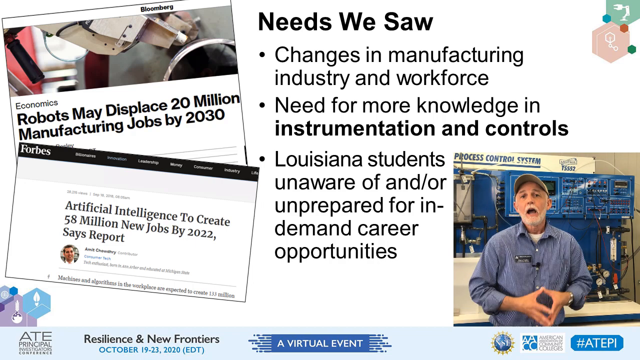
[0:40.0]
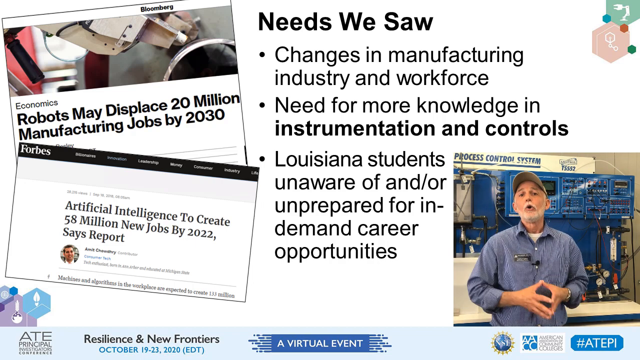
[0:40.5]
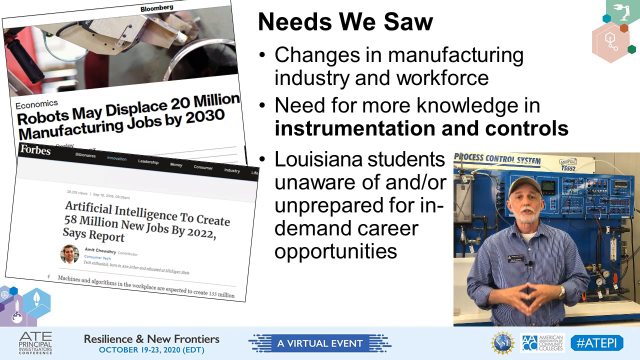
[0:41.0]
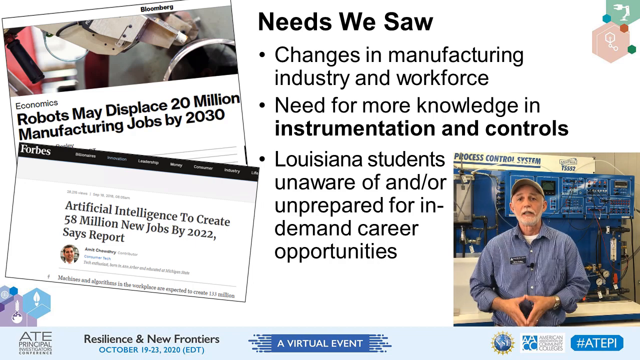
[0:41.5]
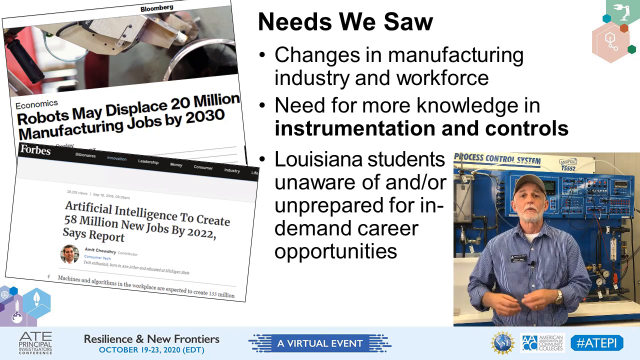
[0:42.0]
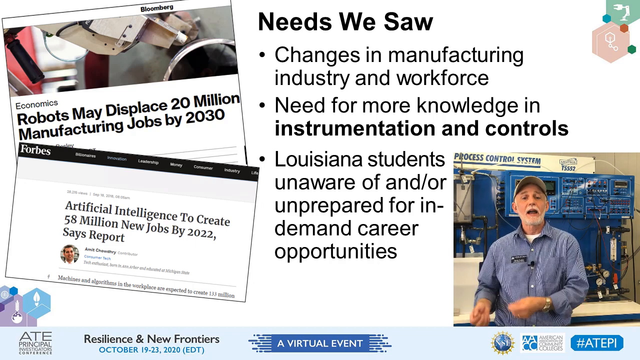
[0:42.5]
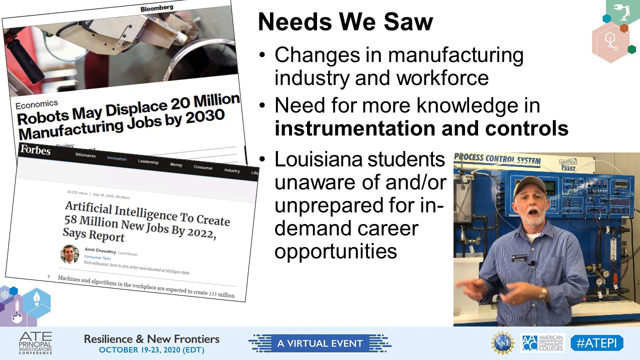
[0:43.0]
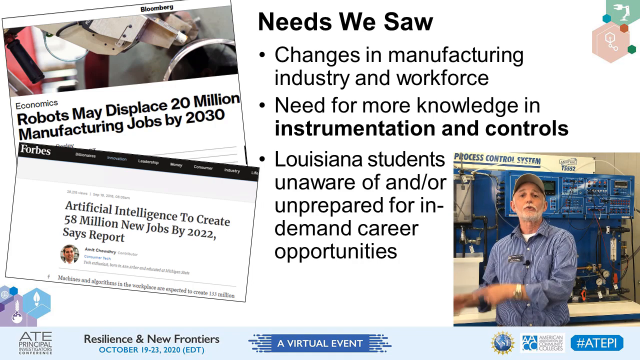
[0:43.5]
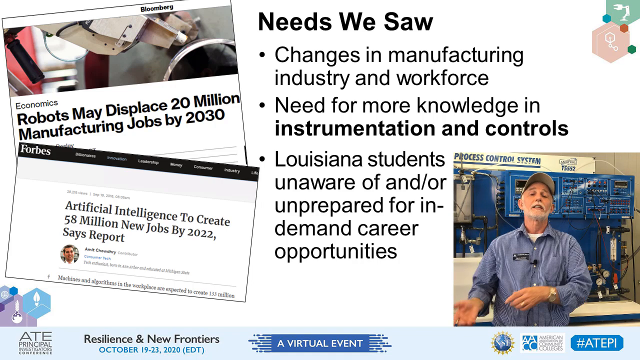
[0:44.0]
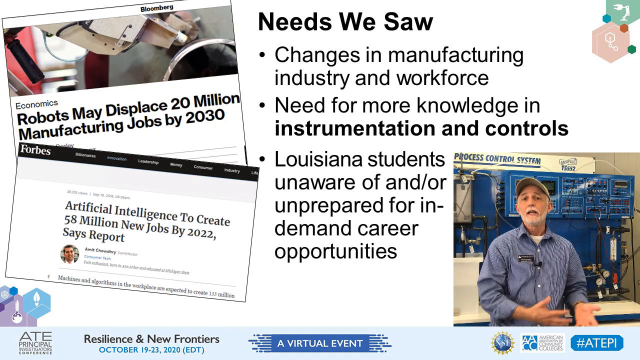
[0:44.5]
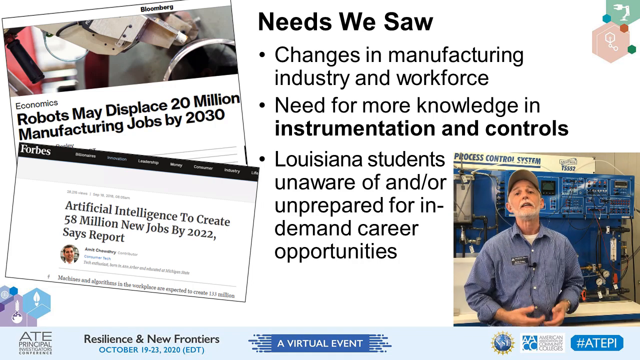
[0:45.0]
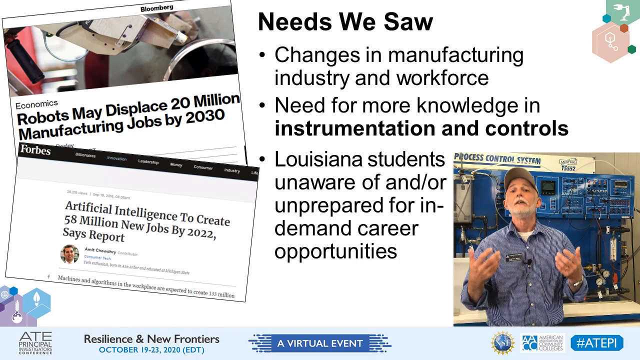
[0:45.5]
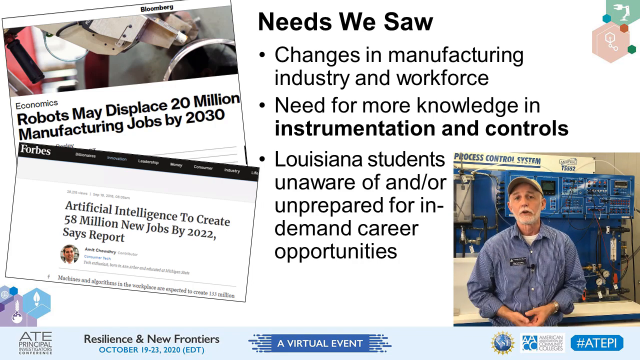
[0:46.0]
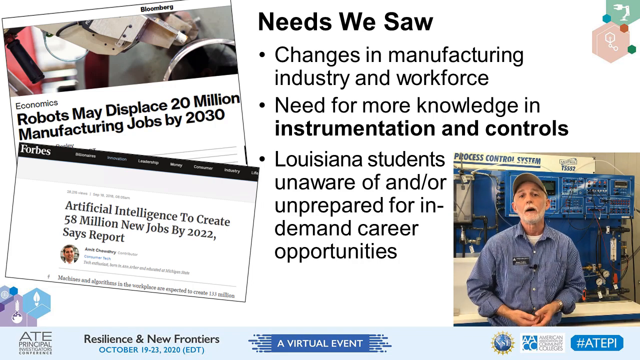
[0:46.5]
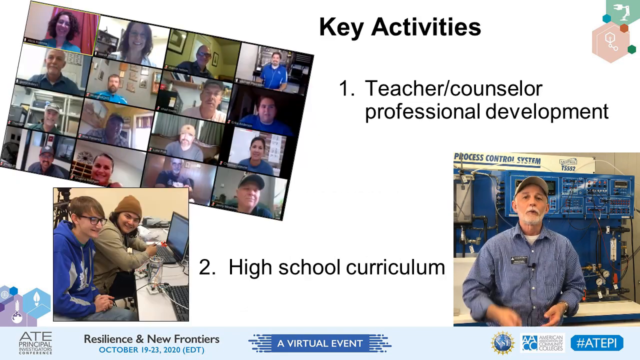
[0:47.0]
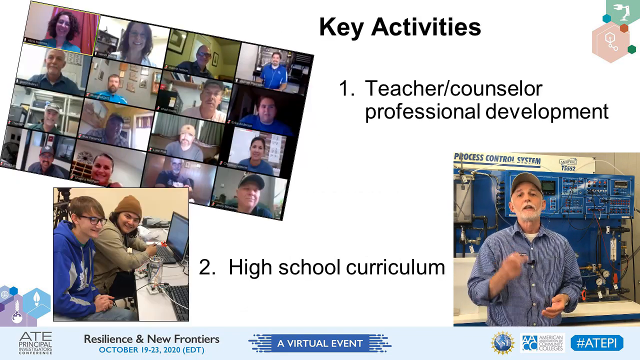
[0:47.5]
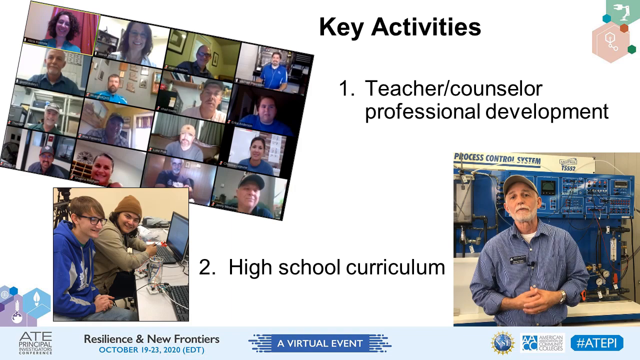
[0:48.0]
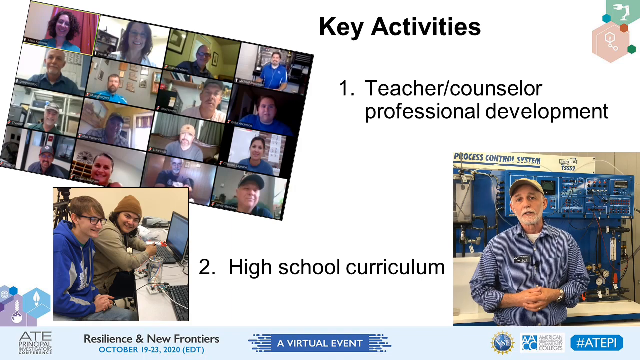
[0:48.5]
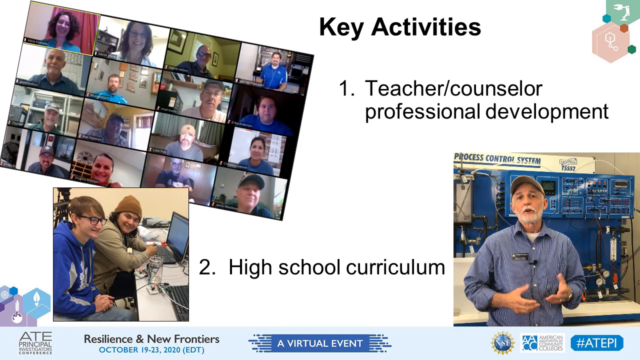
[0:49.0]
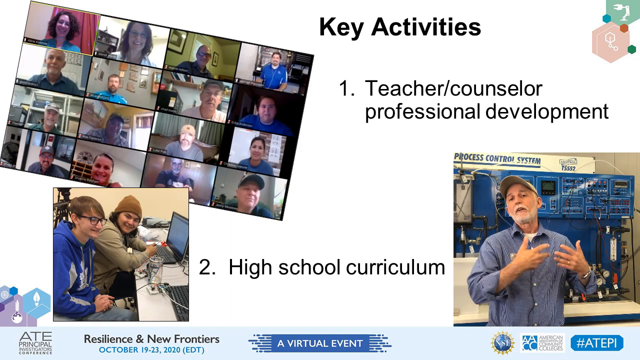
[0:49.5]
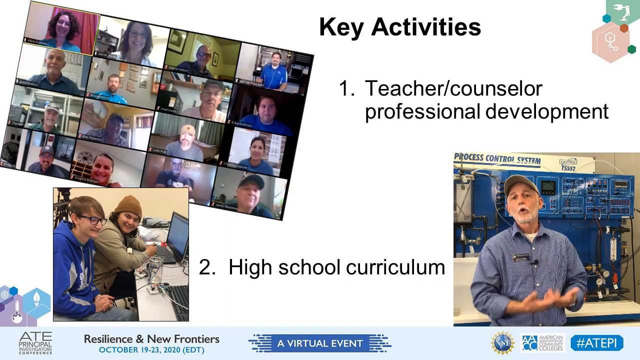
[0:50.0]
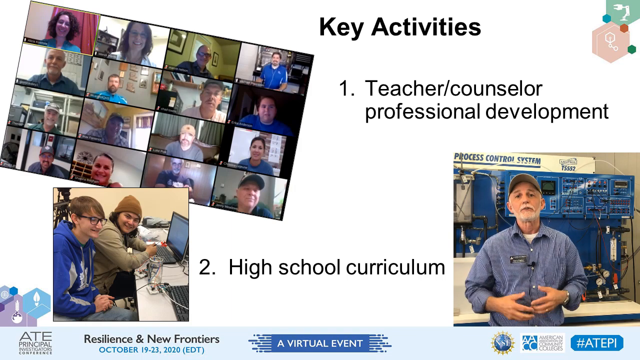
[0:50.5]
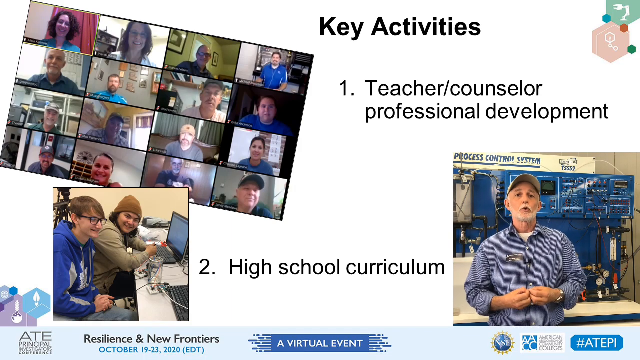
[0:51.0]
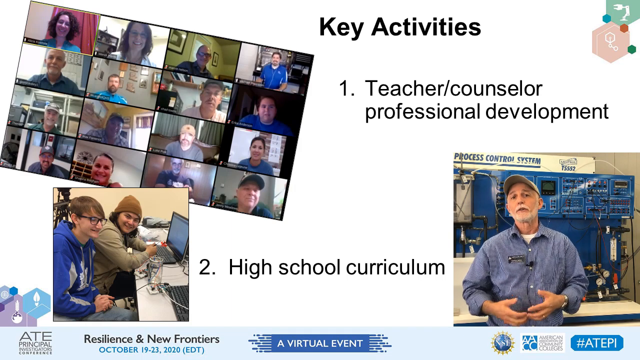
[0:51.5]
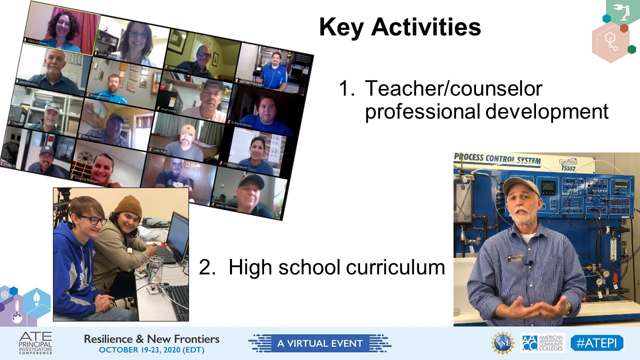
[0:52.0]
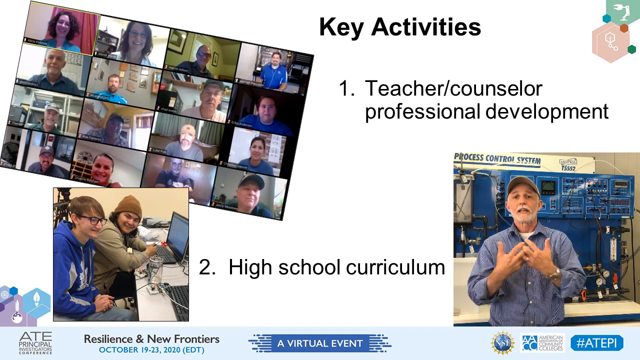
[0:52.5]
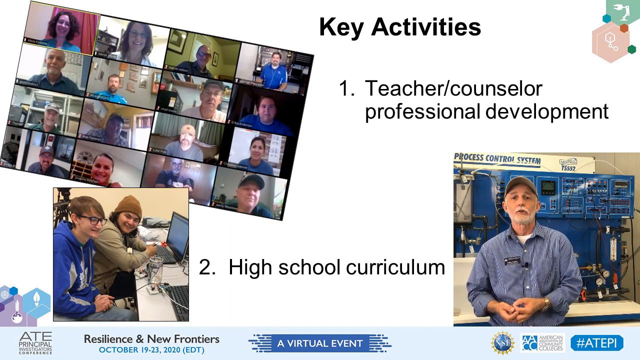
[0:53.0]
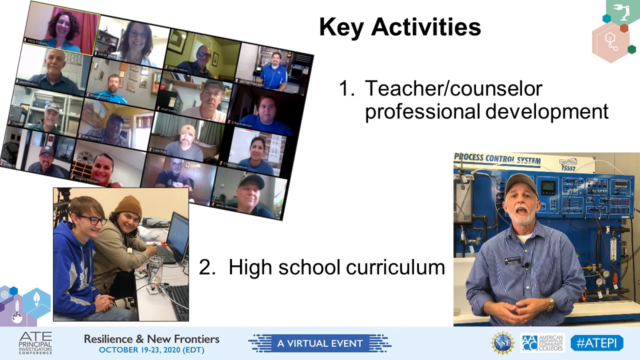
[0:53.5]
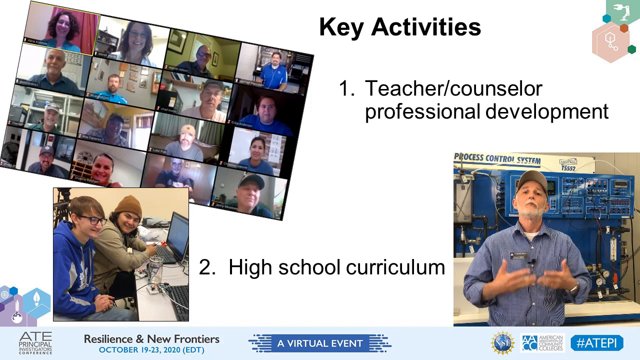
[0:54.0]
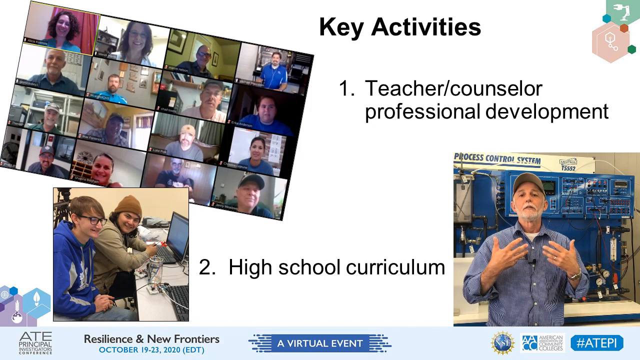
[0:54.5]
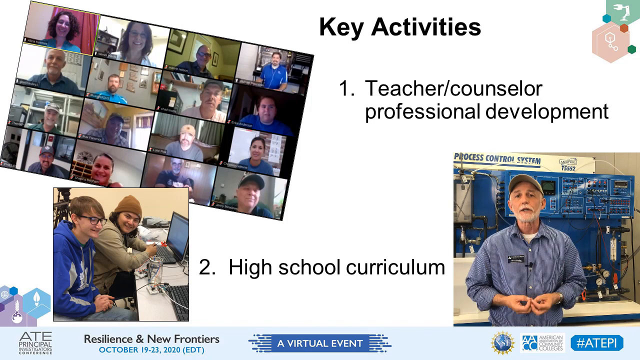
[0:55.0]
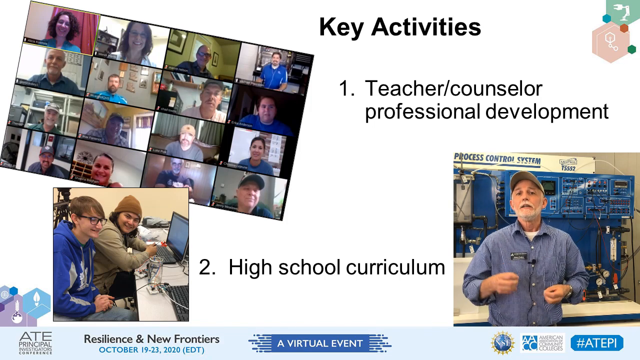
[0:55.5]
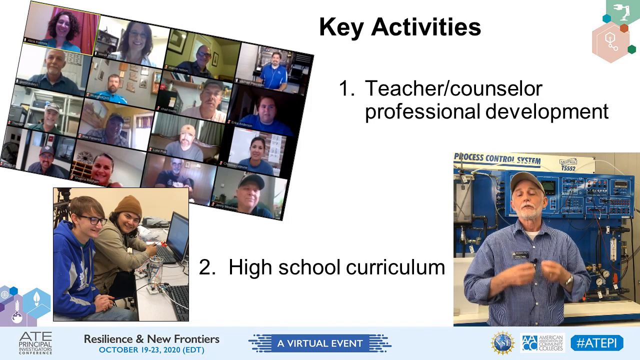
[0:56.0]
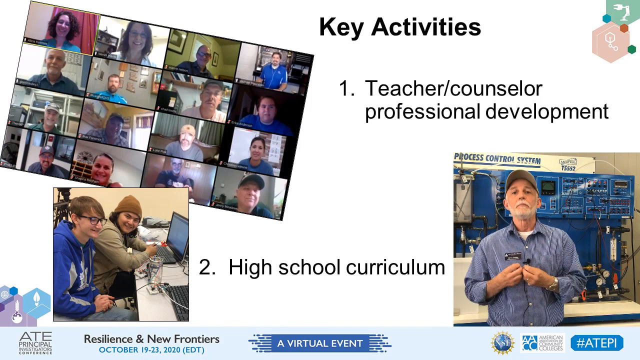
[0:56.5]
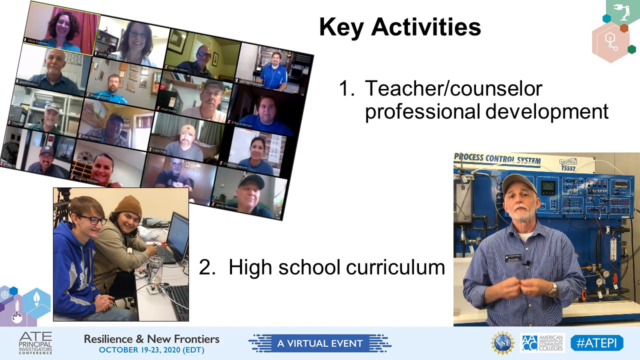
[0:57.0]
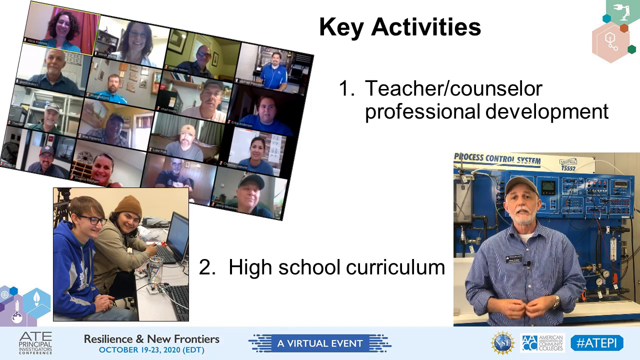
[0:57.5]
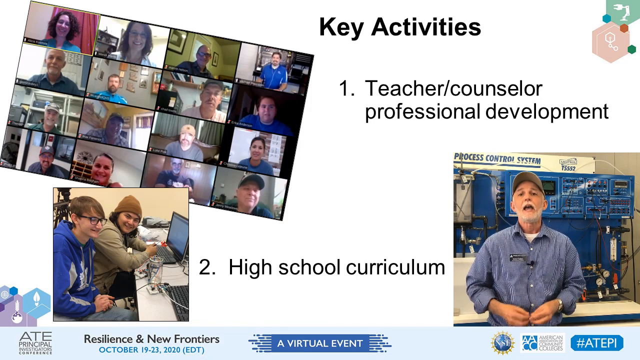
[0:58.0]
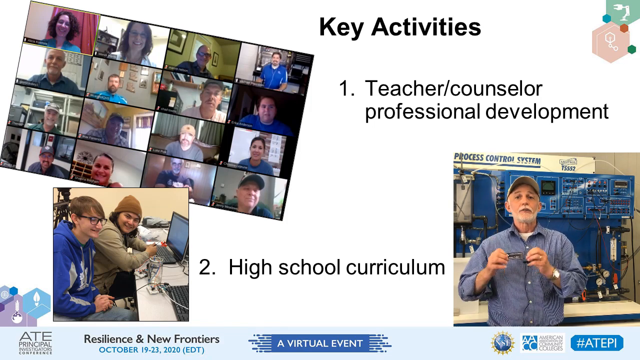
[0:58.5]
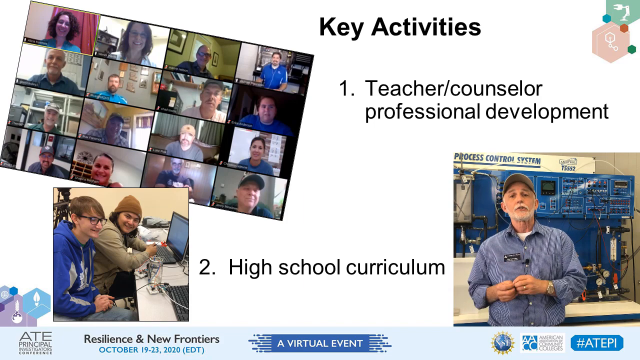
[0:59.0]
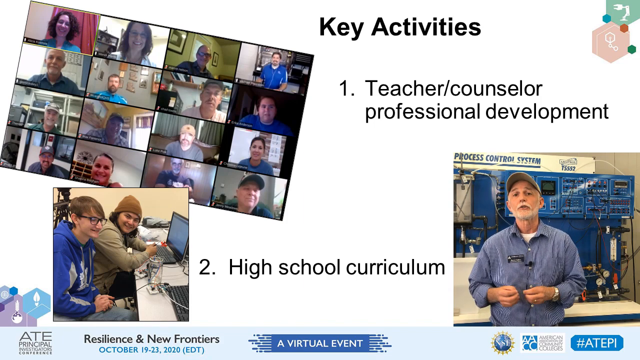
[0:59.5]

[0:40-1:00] The screen about AI and robots displacing jobs but also creating jobs continues, with text about changes in the manufacturing industry and workforce, the need to be more knowledgeable in instrumentation and controls, and Louisiana students being unaware and or unprepared for the demands of career opportunities. The same gray-haired older man, probably aged 50 to 60, in a sort of blue shirt, is still shown on the page against a kind of mechanical-style laboratory or workshop background, continuing to talk. The video then transitions to a page titled "key activities" in black text on a white background: bullet point one reads "teachers counselors professional development" and number two reads "high school curriculum." A few different images of students then appear on this page.